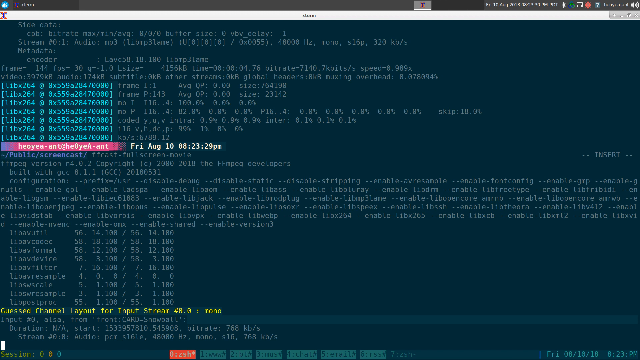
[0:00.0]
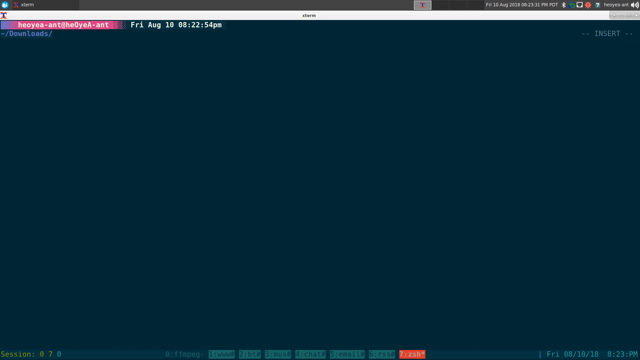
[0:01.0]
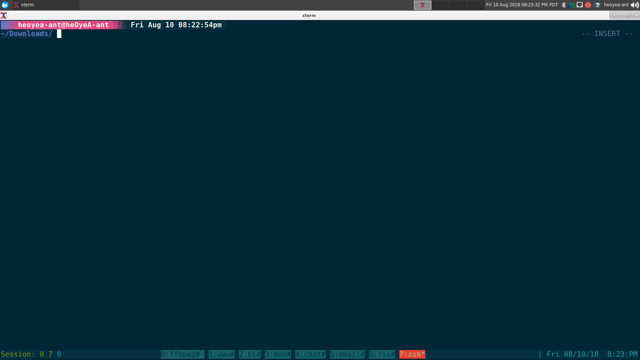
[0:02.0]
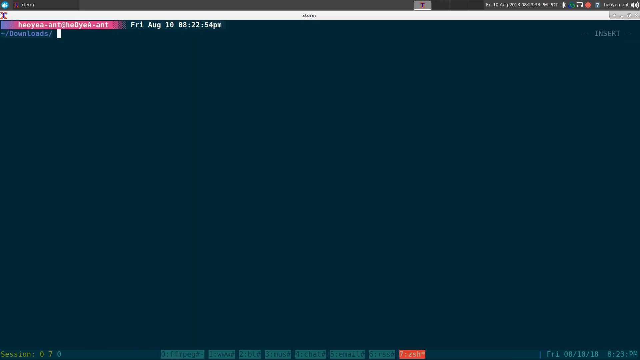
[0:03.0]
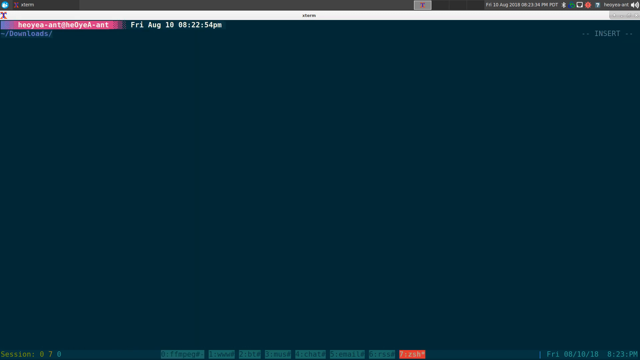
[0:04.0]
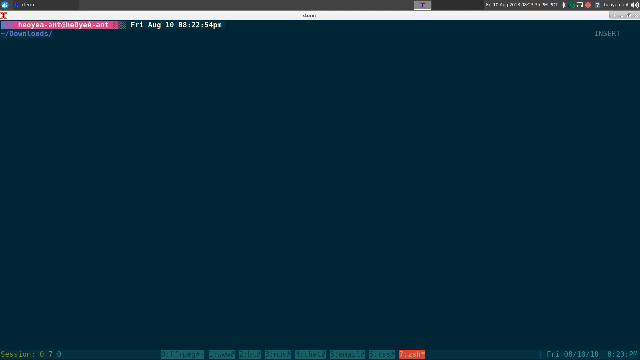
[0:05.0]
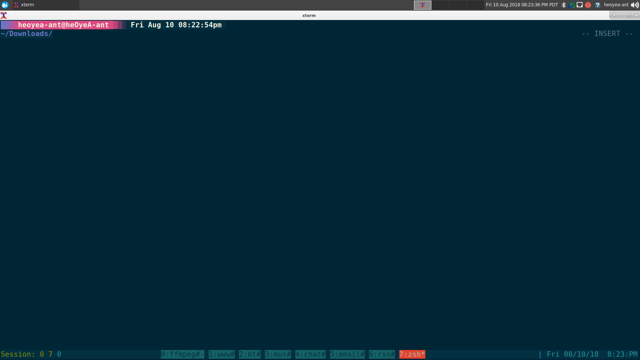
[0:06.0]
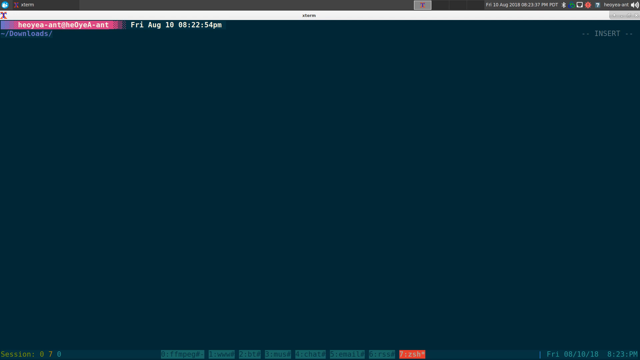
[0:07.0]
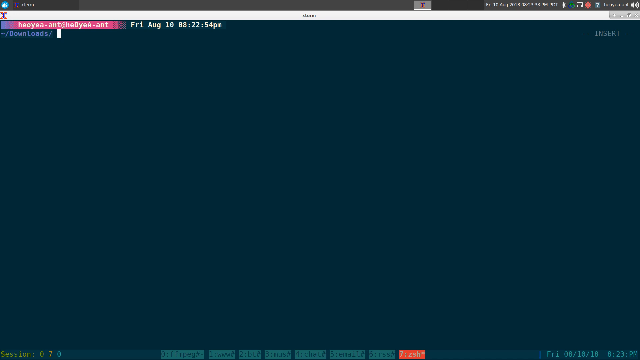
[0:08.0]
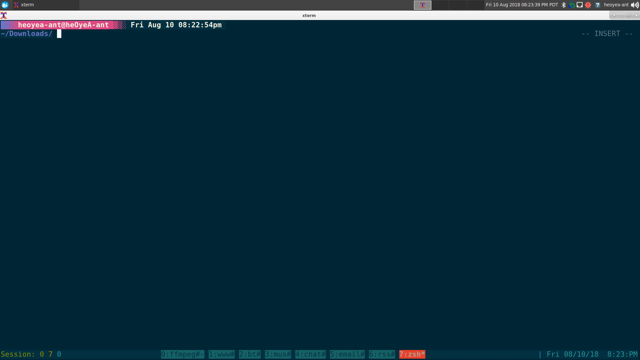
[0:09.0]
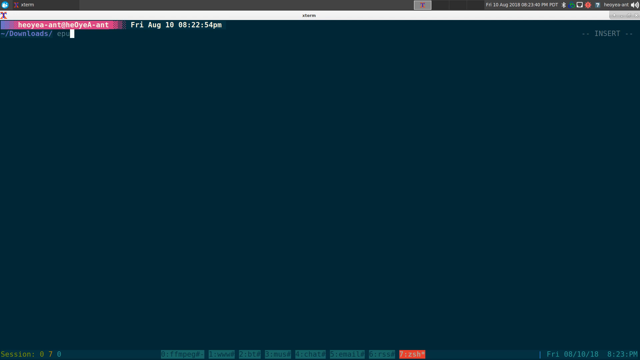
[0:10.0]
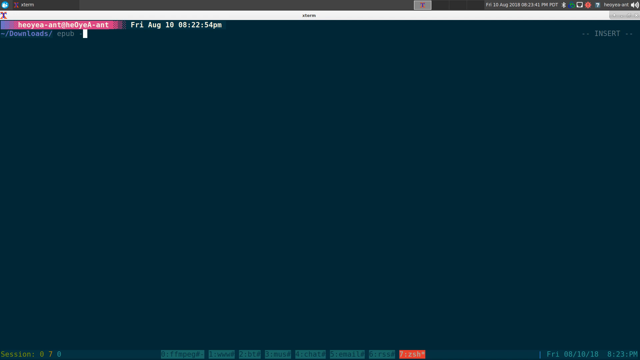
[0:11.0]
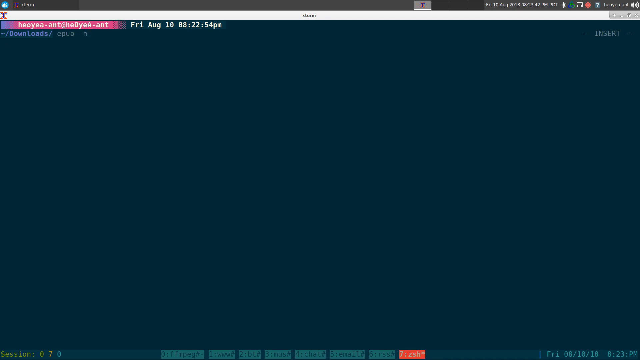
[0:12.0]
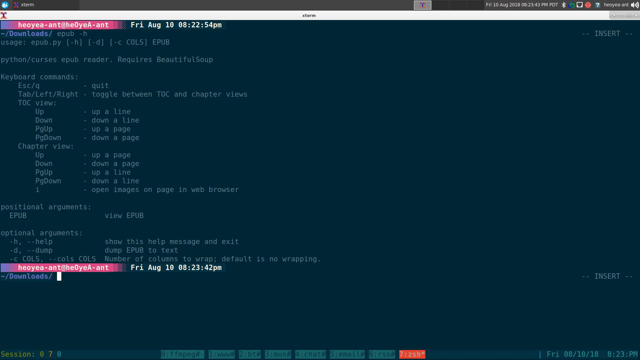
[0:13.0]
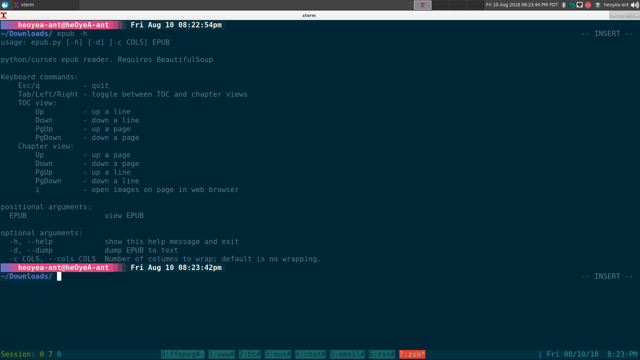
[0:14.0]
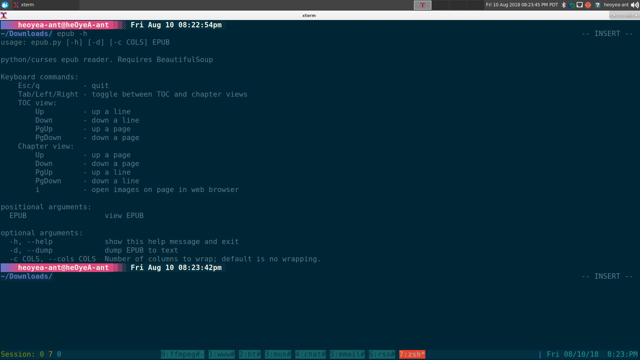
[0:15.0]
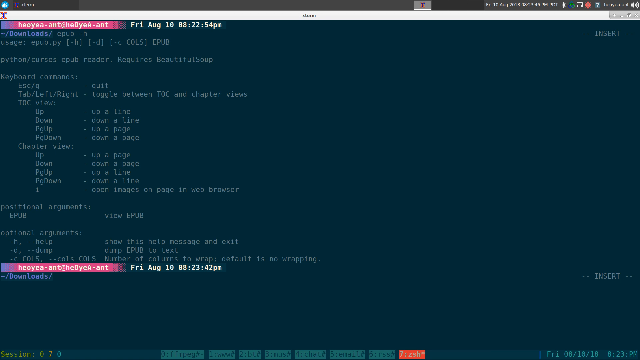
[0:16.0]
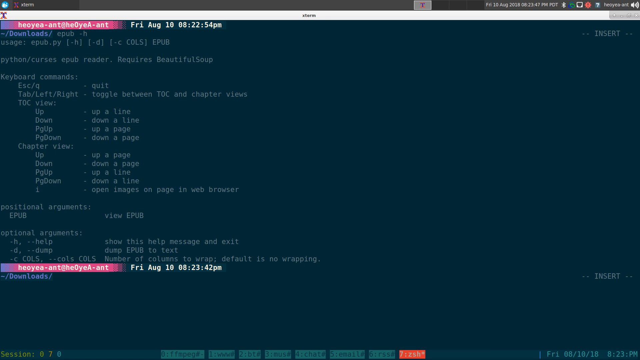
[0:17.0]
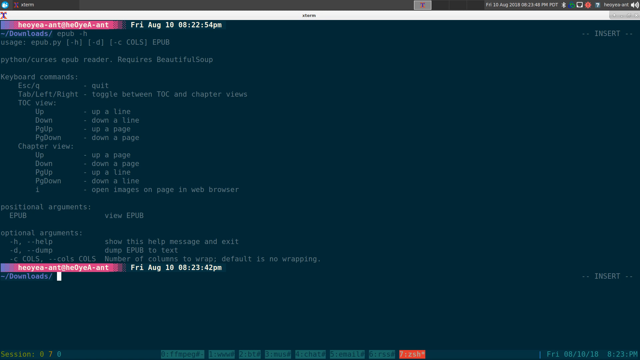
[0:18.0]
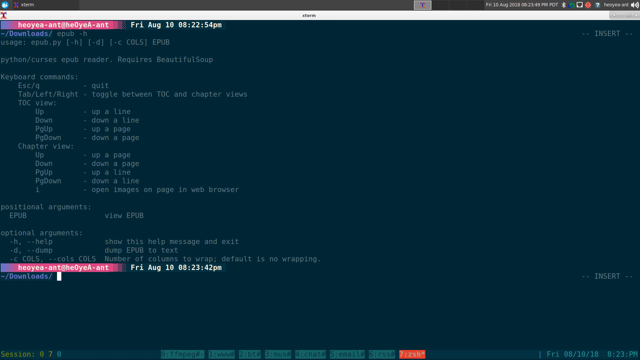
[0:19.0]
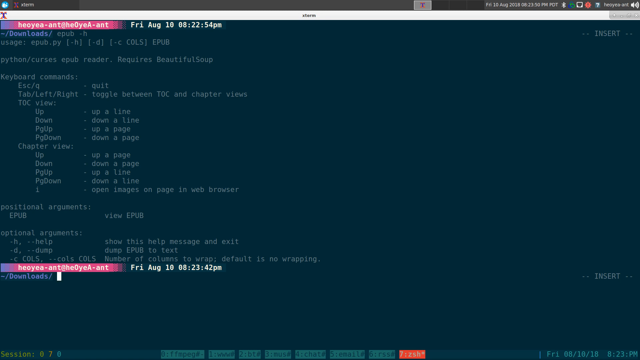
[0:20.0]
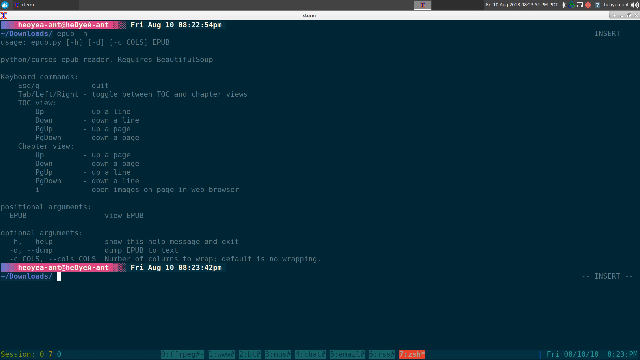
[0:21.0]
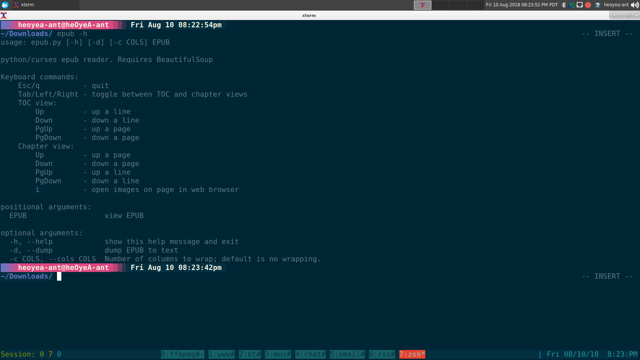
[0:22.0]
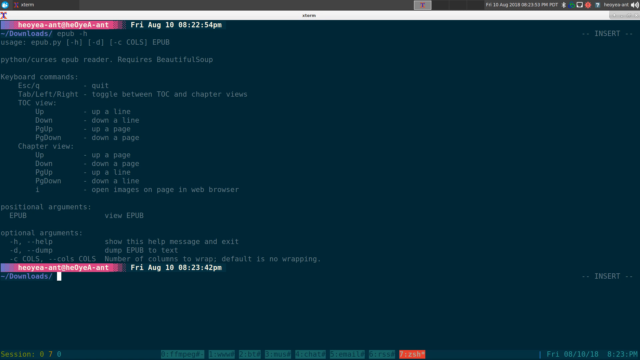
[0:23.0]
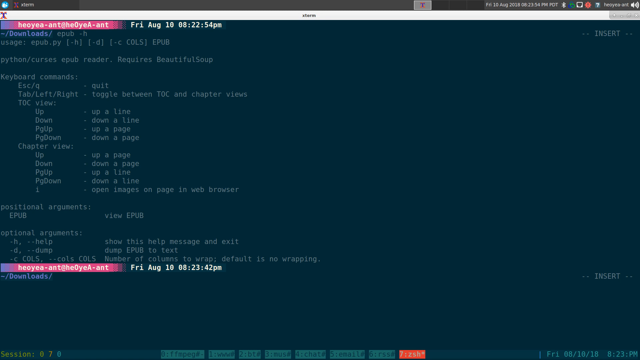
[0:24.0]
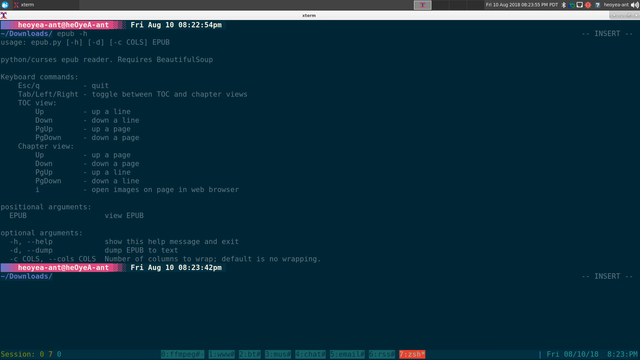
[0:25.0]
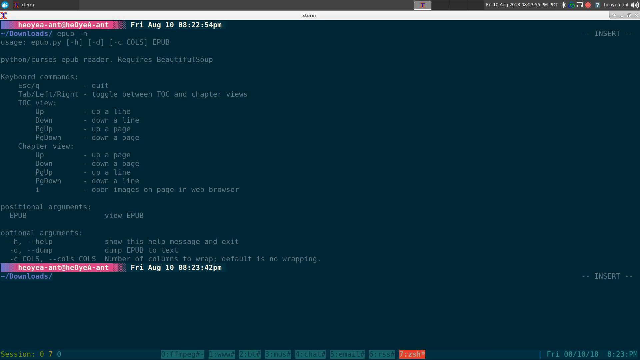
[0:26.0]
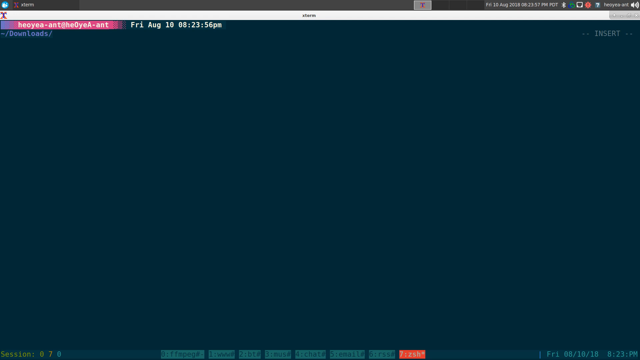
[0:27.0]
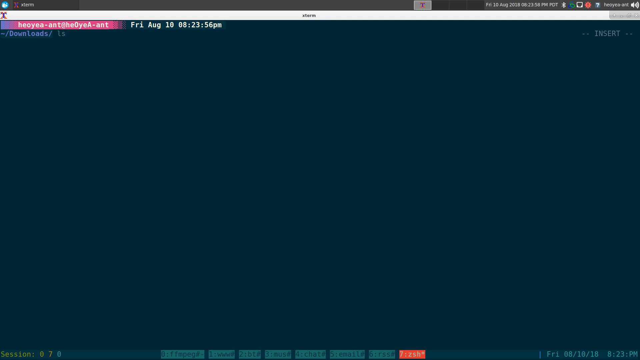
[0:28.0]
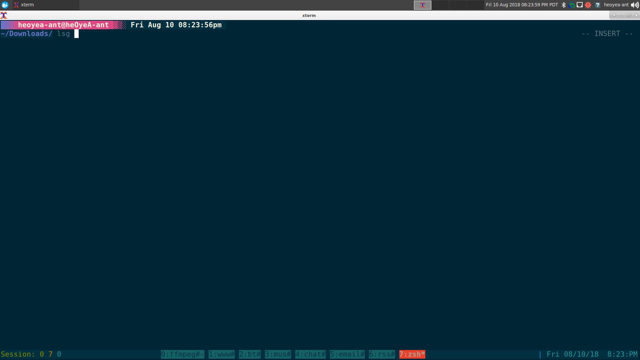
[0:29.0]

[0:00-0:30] The screen recording shows some type of terminal with a number of commands and information on the screen. It scrolls for a bit before everything is cleared. The information at the top shows the user account it is logged into and the date: Friday, August 10th, 8:22 p.m. The current folder open is the downloads folder, and the cursor blinks for a few moments. The person types "epub -h", and a list of commands appears below, some of them keyboard commands and others arguments the program can take. The terminal prompts the user for another command, and the cursor starts to blink again. After a few seconds of blinking, the window is cleared again, showing the same downloads folder and prompting the user to type.